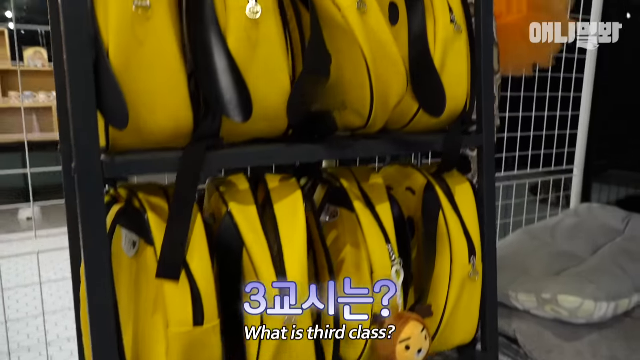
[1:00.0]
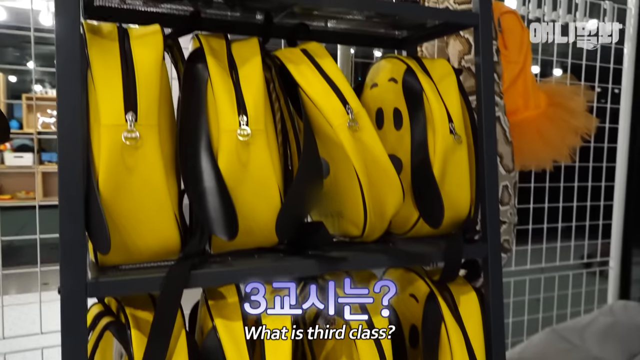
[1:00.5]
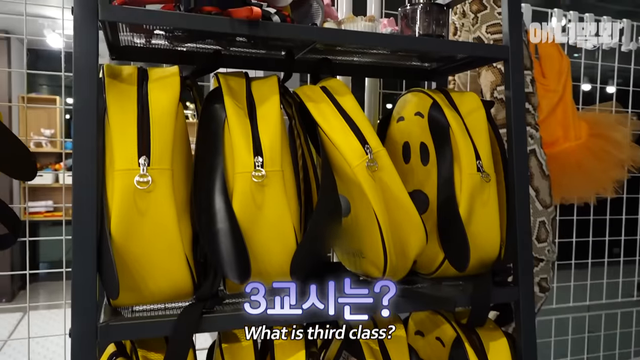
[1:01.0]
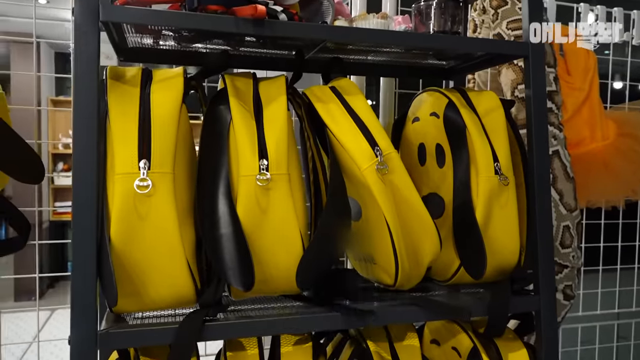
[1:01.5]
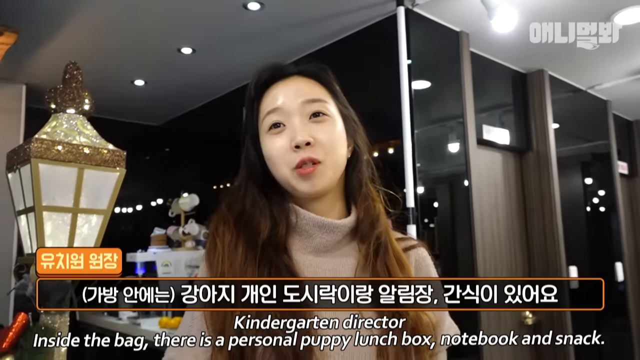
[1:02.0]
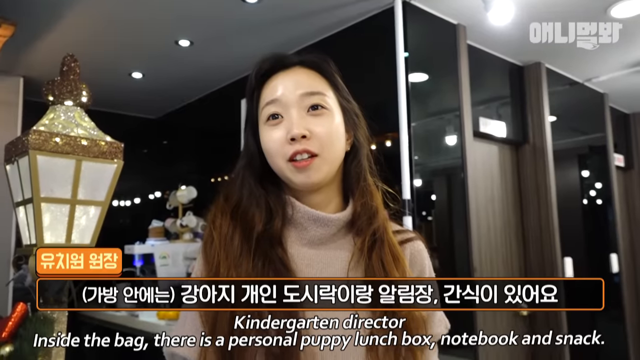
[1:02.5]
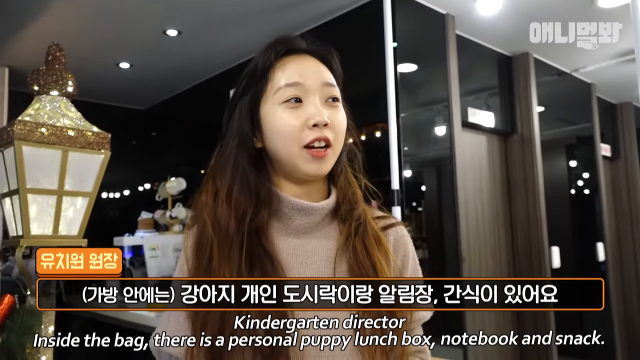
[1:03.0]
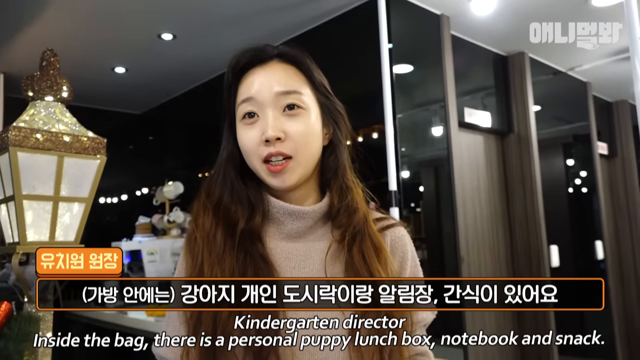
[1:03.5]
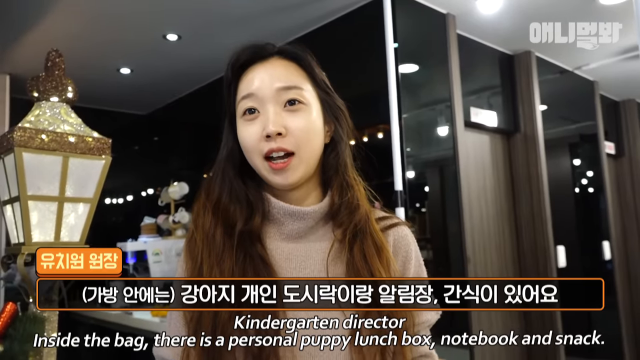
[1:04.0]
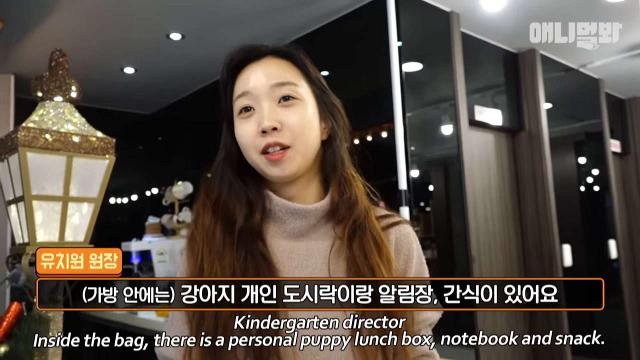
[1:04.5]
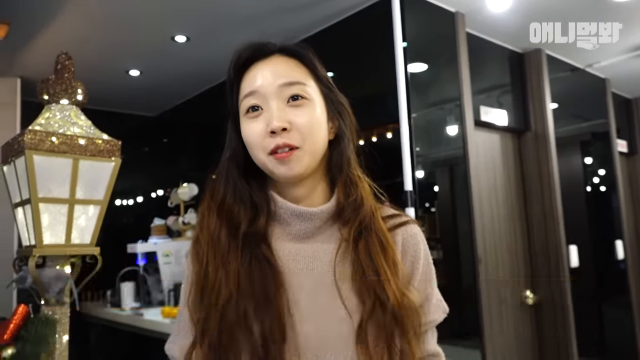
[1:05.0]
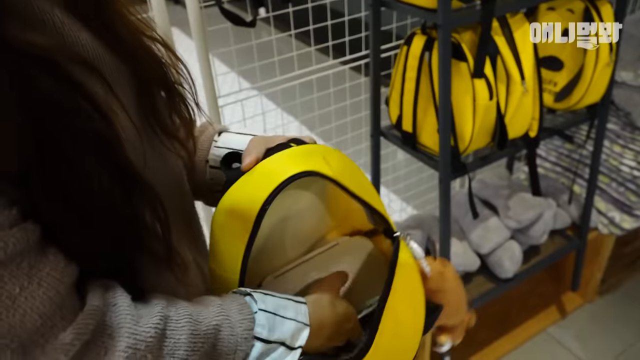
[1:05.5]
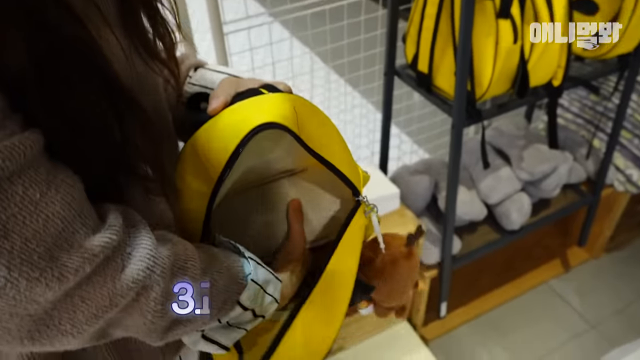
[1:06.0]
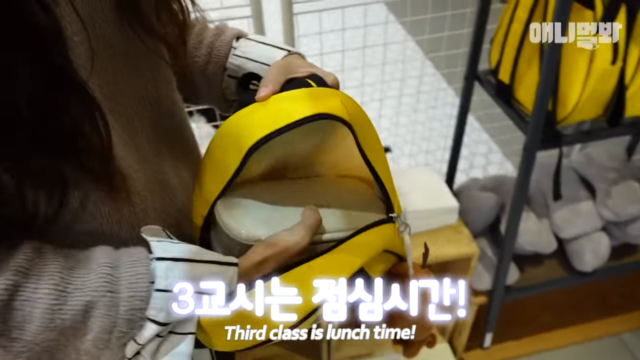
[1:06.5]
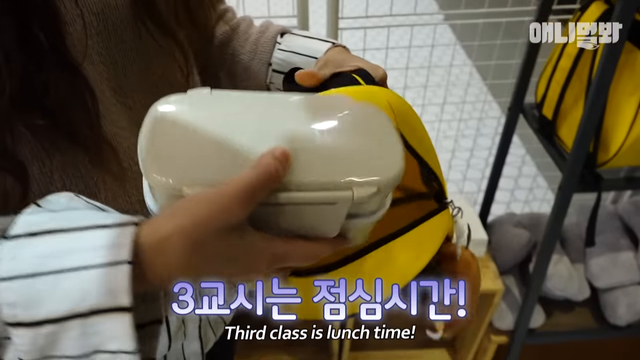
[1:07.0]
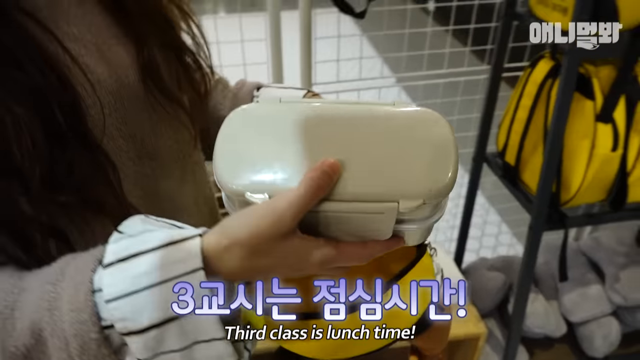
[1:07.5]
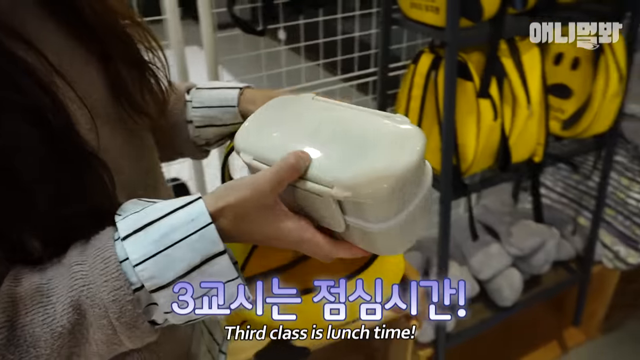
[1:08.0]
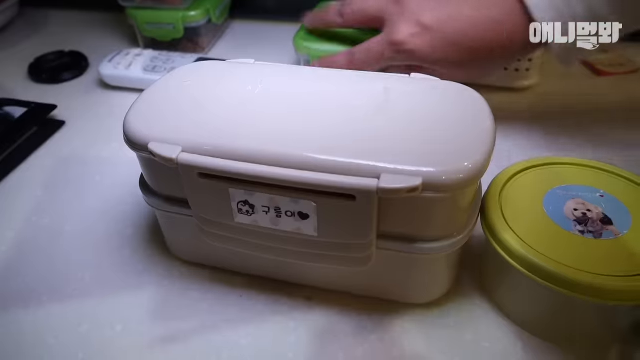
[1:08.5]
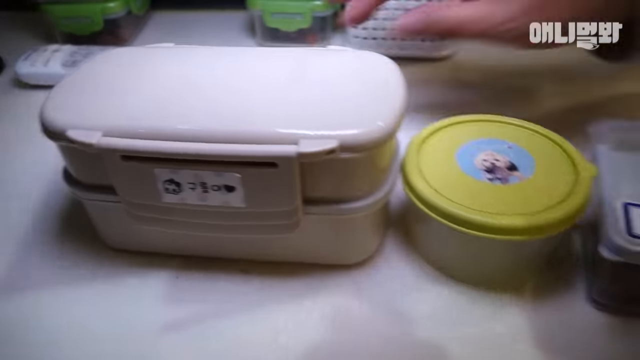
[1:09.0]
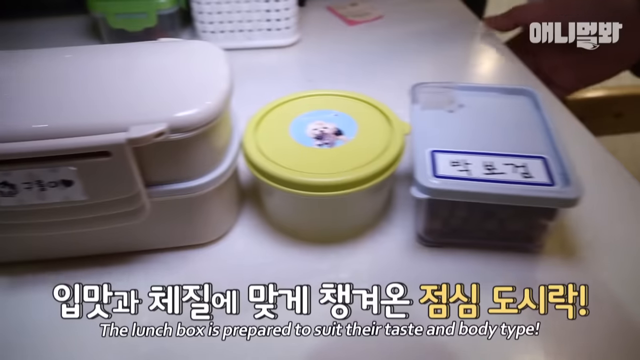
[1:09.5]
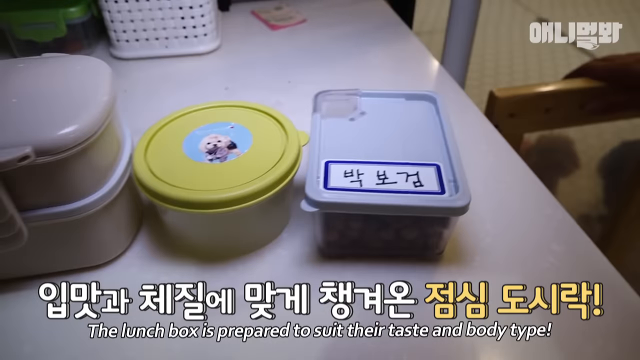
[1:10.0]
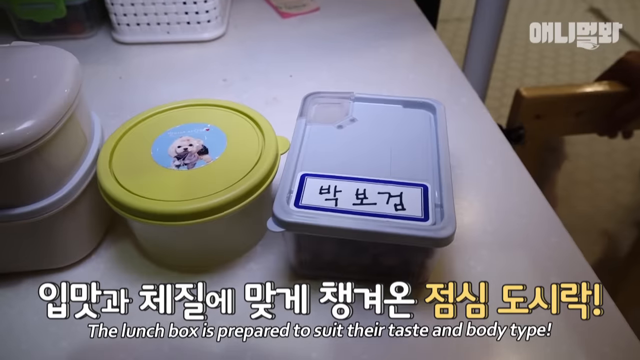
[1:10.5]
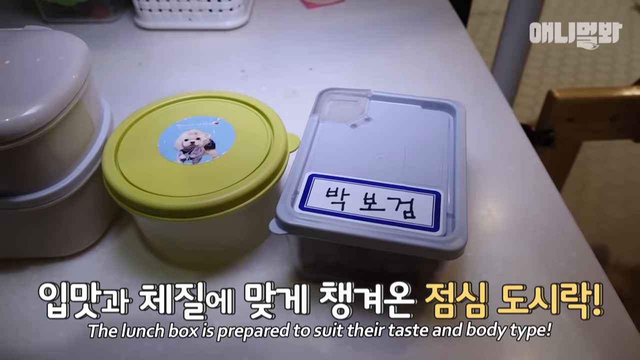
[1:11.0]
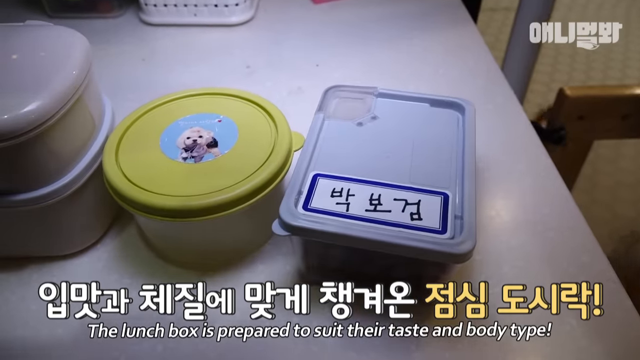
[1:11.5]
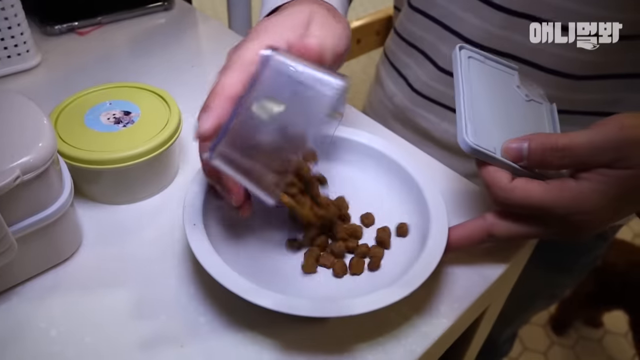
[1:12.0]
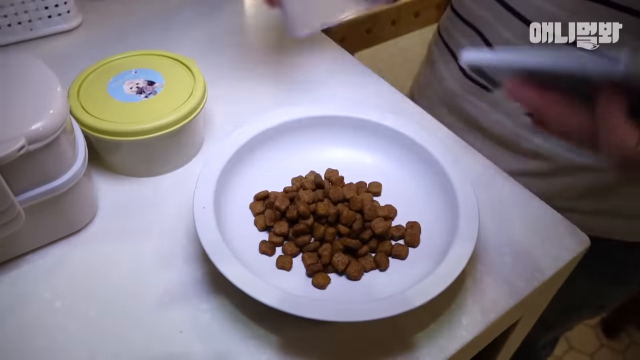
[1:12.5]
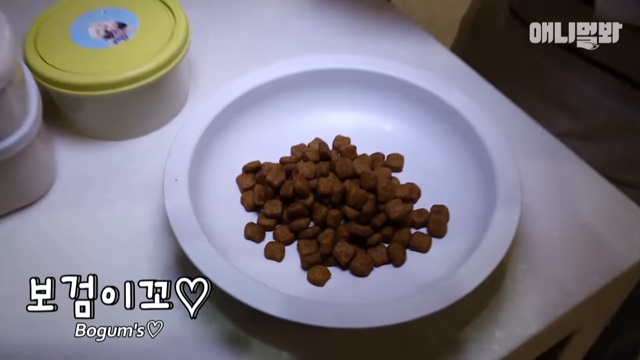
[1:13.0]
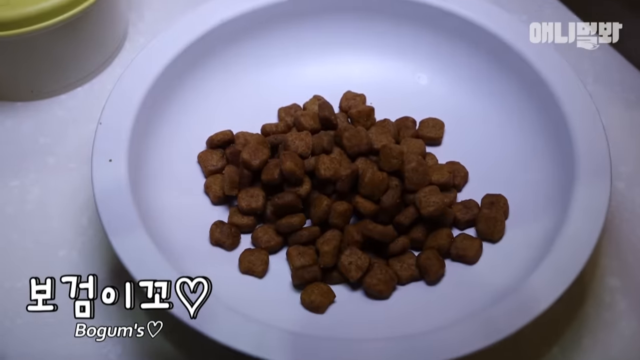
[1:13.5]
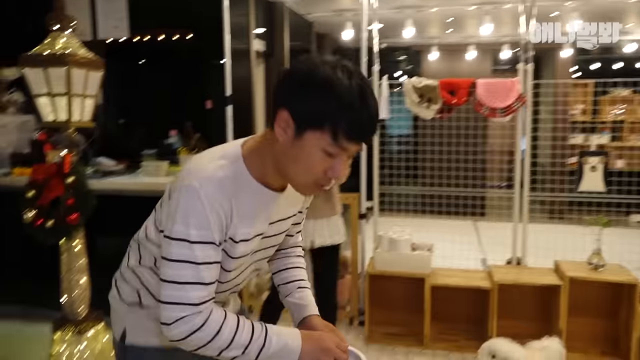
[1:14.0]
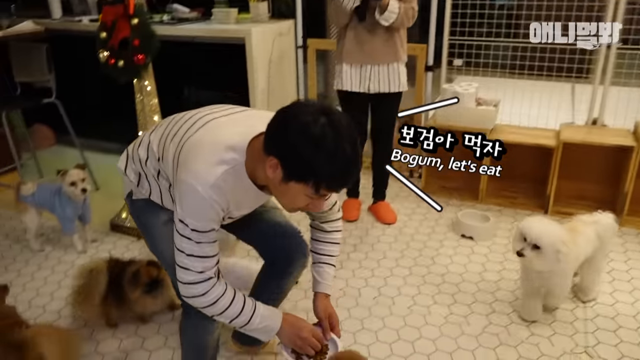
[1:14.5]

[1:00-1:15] Yellow backpacks hang on a black rack with the caption "what is the class?" A woman takes little bento-style doggy lunch boxes out of the backpacks, and the captions say the bags have "a personal puppy lunch box, notebook, and snack." She opens one of the boxes and pours brown kibble inside, and a man crouches in front of one of the dogs and hands it the bowl of food. The woman looks very friendly and eager. The dogs are not seen much here; the focus is more on the humans. At the end there is a shot of the man with about five dogs around him, on screen for only a few seconds. The lunch boxes vary in size; some are square, some are round, and one has a round yellow lid with a sticker on it.